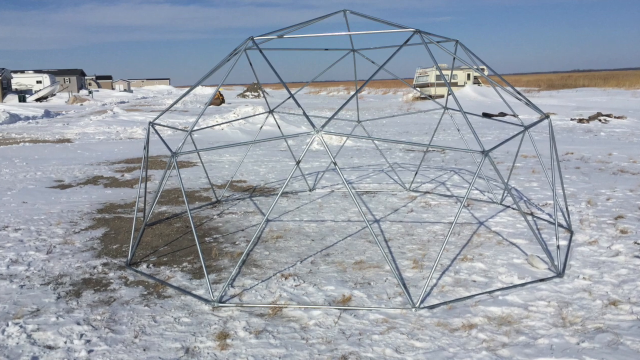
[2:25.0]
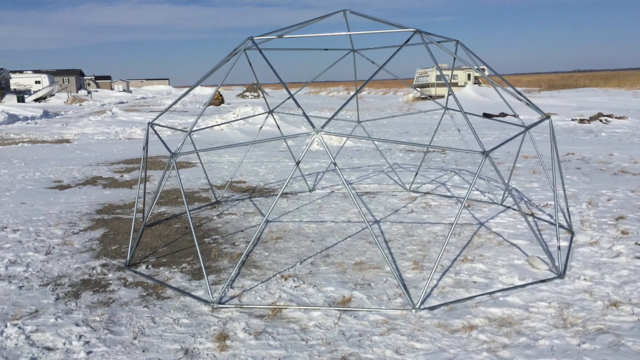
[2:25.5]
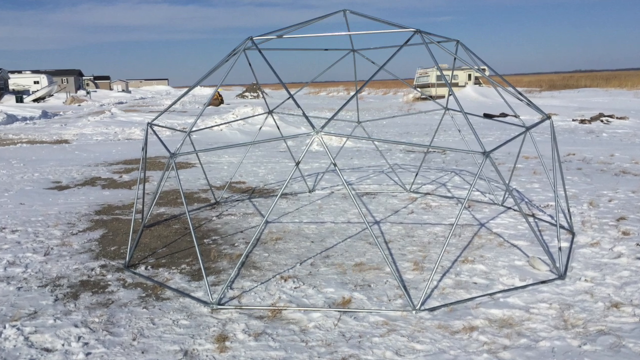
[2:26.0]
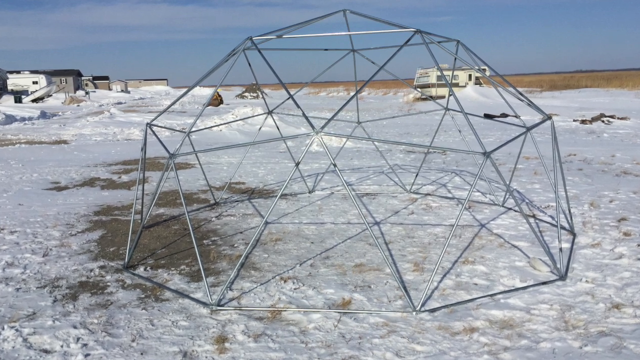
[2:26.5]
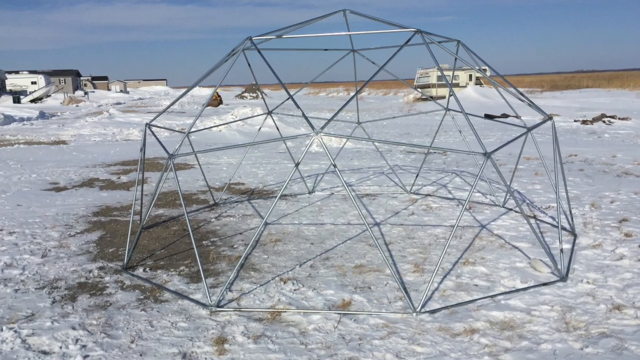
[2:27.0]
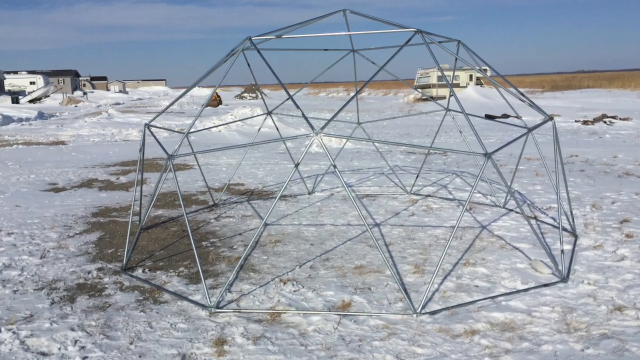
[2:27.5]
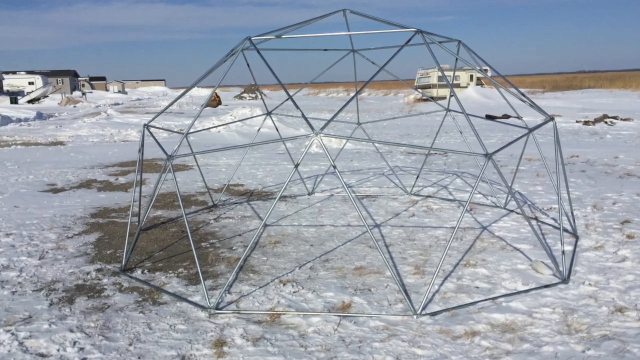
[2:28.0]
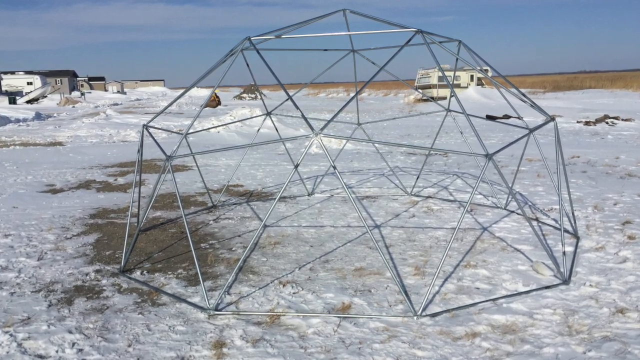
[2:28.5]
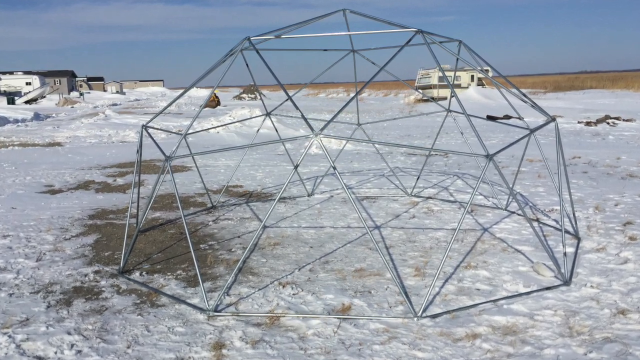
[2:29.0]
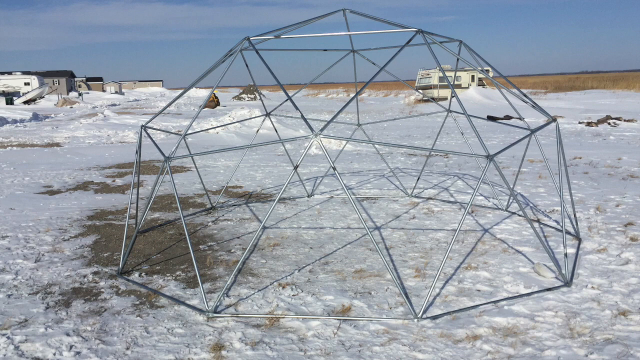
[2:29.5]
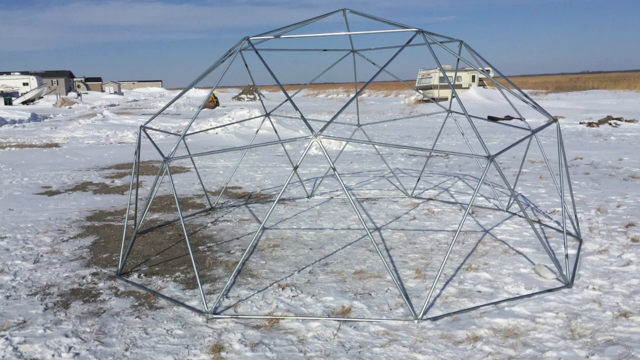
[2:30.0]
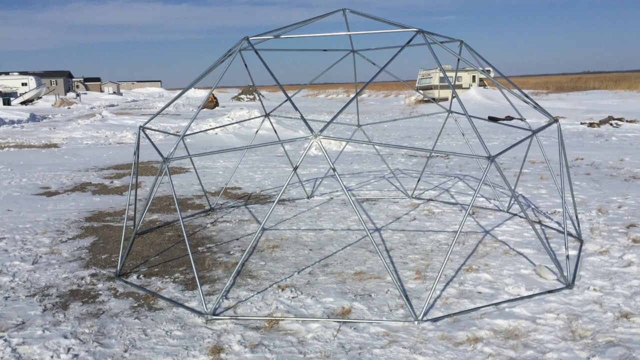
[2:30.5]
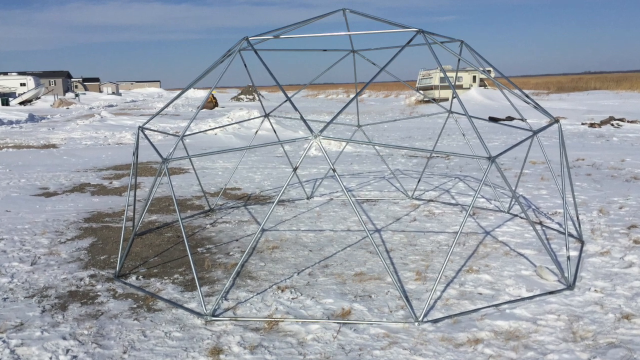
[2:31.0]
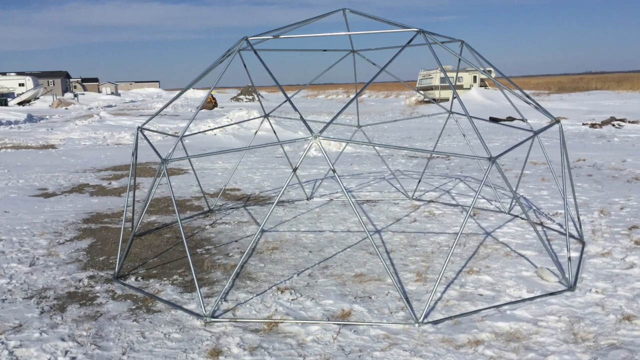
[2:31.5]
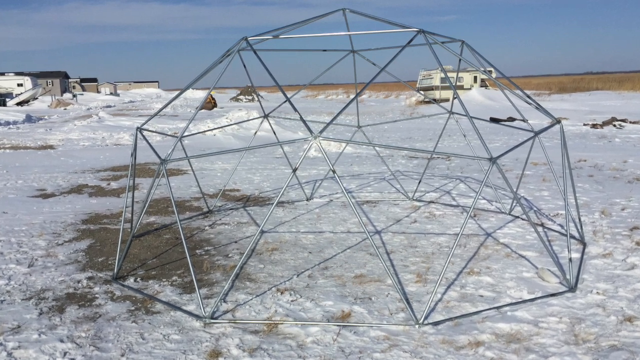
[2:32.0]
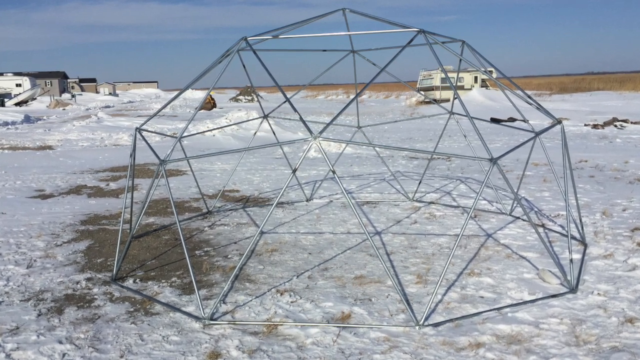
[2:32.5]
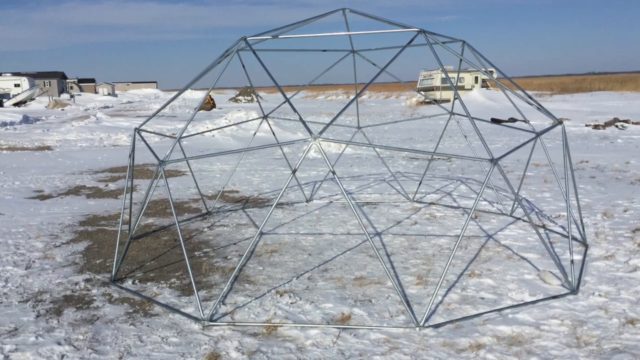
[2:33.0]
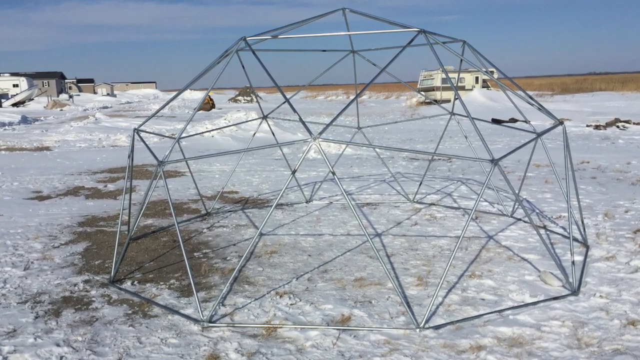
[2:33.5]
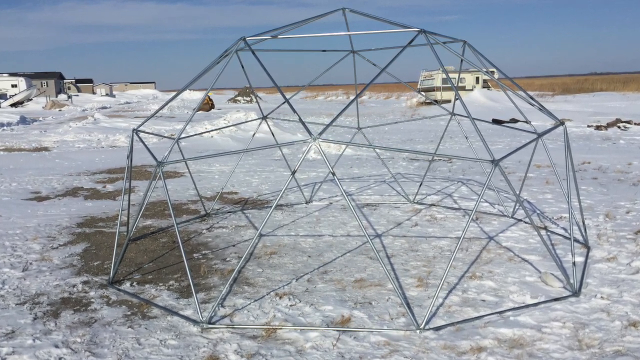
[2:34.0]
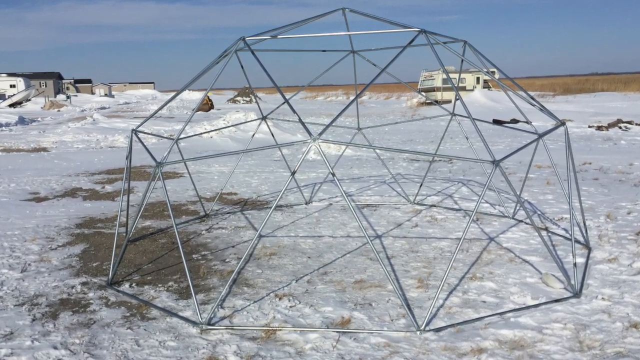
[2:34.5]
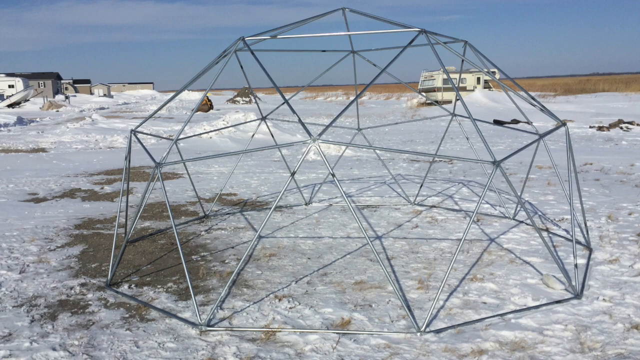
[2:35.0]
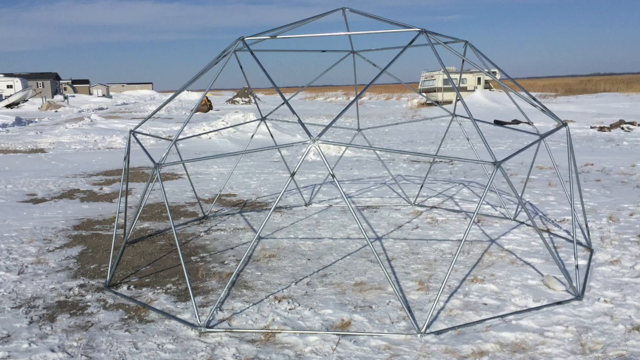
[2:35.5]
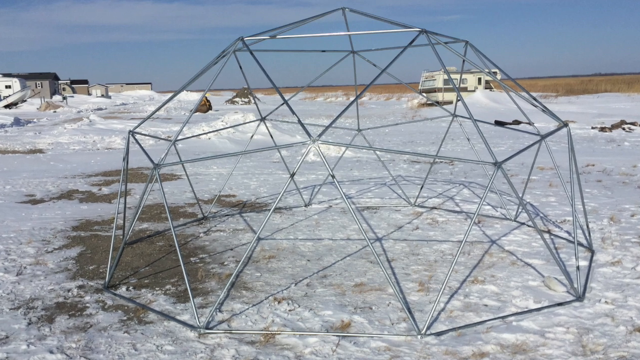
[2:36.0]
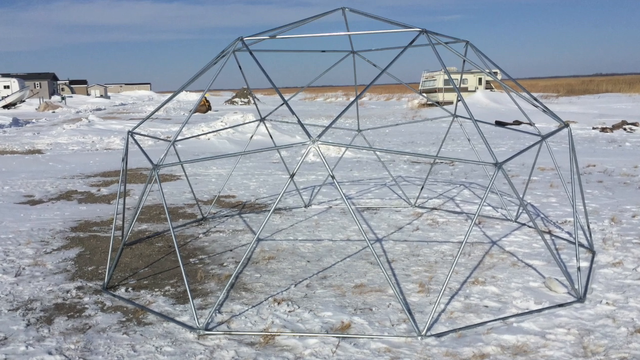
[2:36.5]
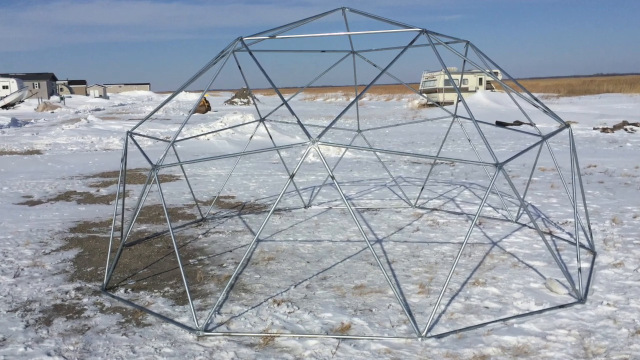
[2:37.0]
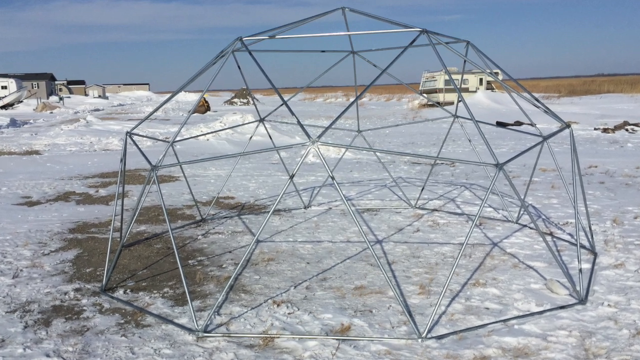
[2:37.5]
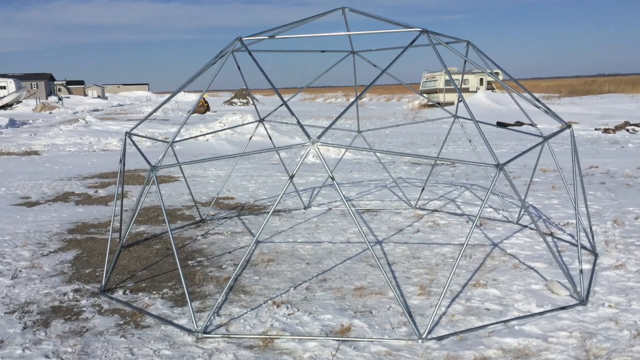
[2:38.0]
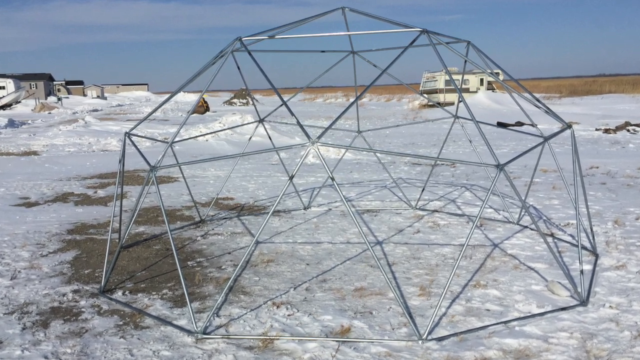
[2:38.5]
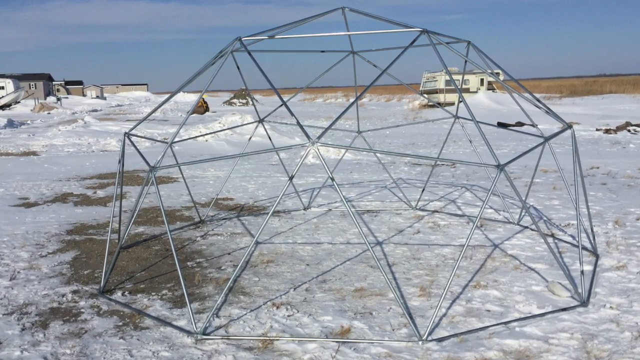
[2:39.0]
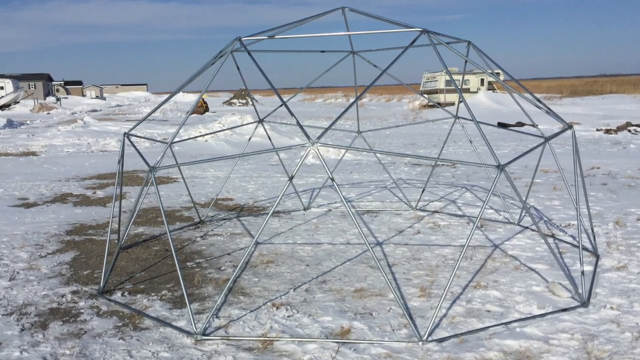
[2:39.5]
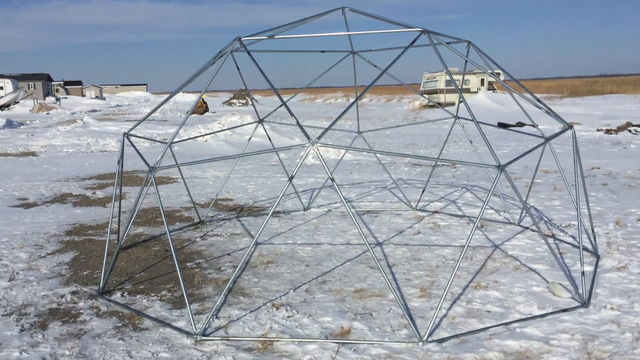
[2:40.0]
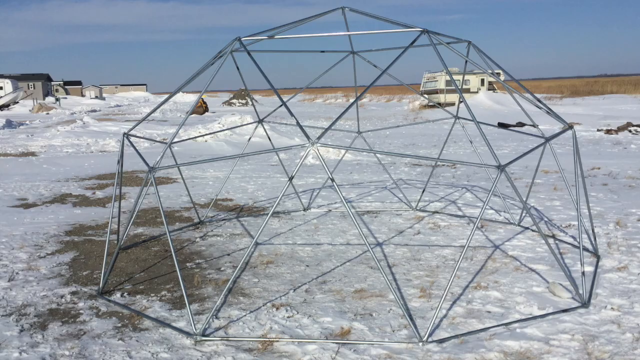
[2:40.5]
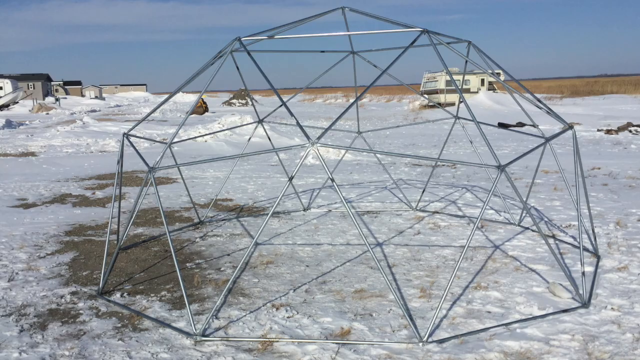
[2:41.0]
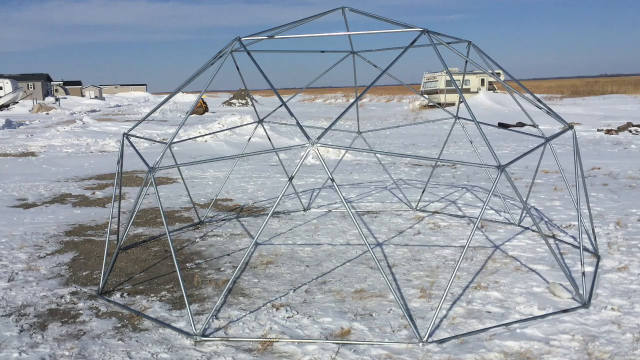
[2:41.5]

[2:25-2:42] The structure is fully assembled. In the background are the camper and the field, and there is still snow on the ground. No people or dogs are visible anymore. The shot is a still picture of the completed structure.